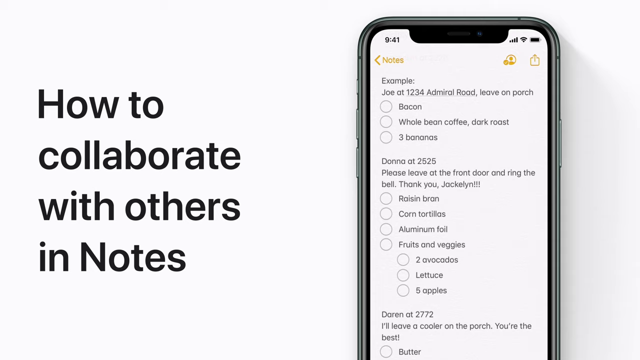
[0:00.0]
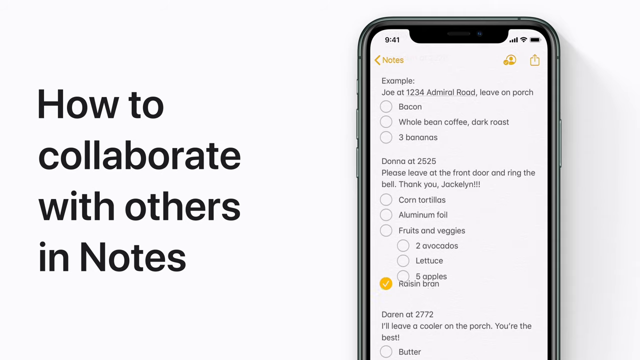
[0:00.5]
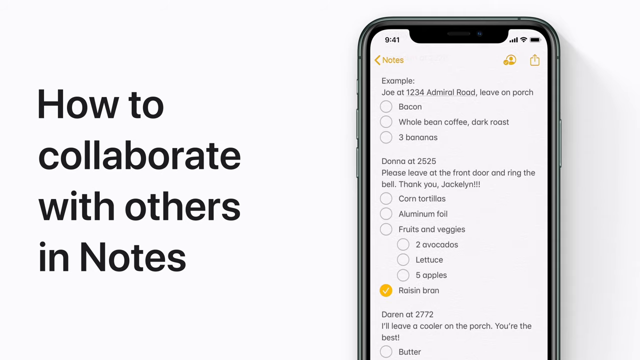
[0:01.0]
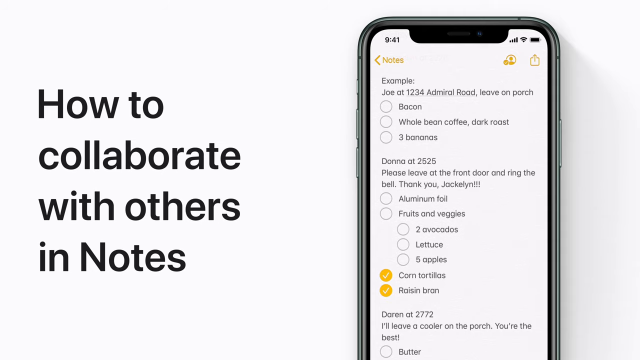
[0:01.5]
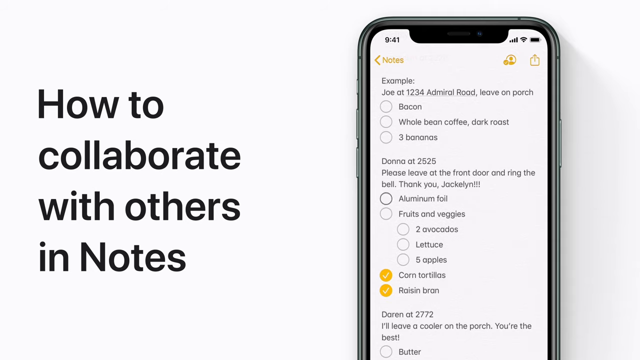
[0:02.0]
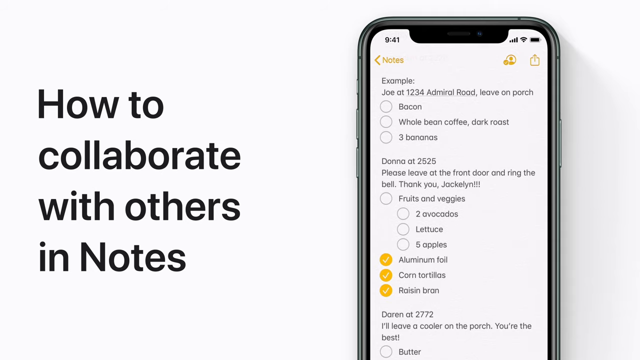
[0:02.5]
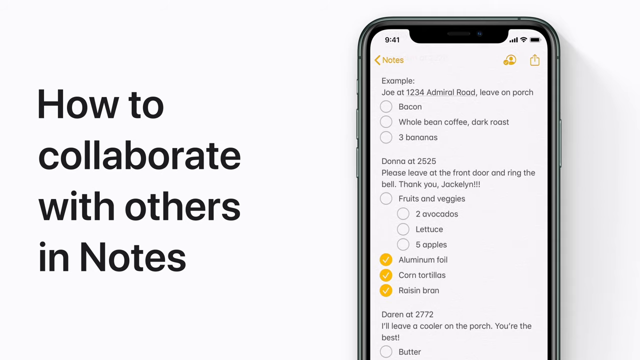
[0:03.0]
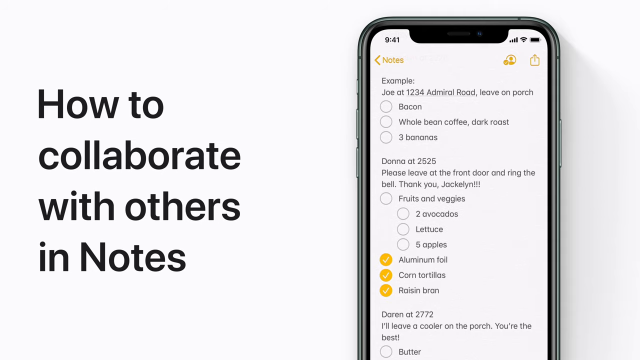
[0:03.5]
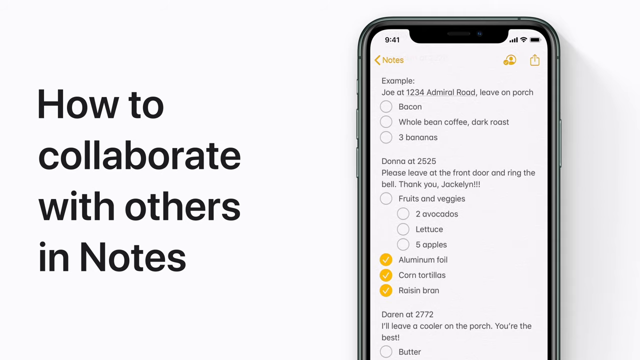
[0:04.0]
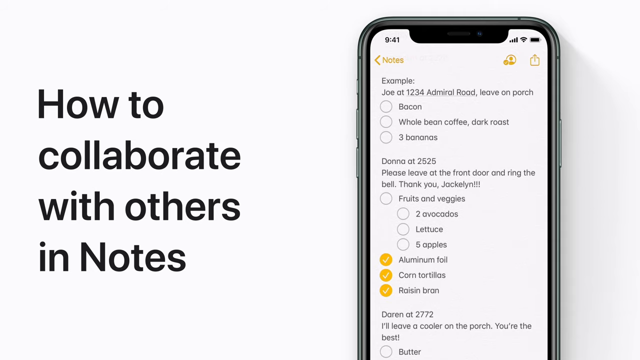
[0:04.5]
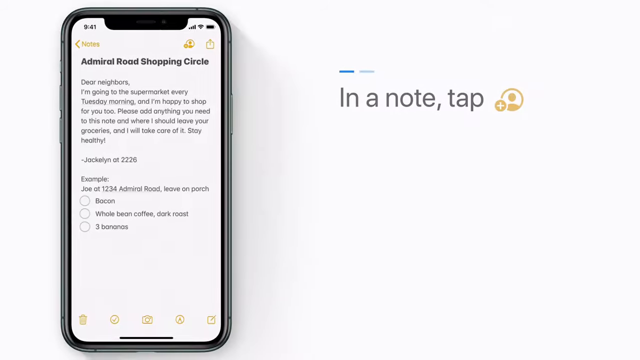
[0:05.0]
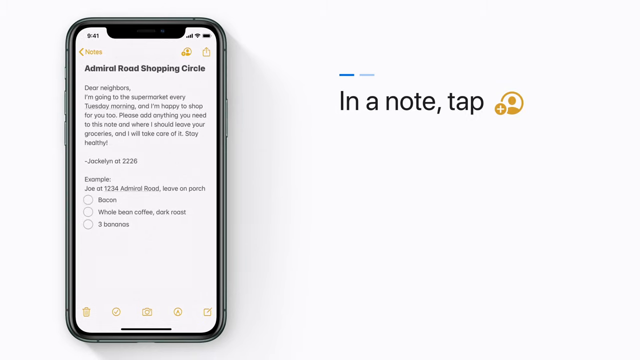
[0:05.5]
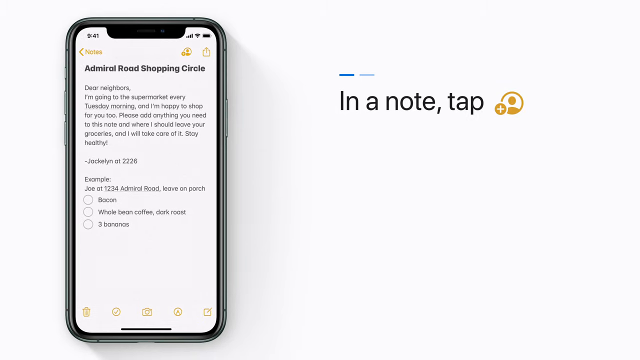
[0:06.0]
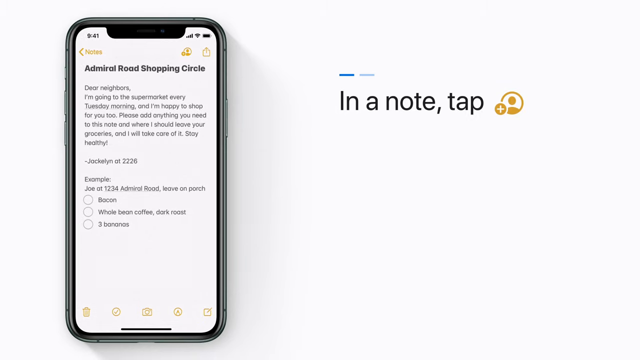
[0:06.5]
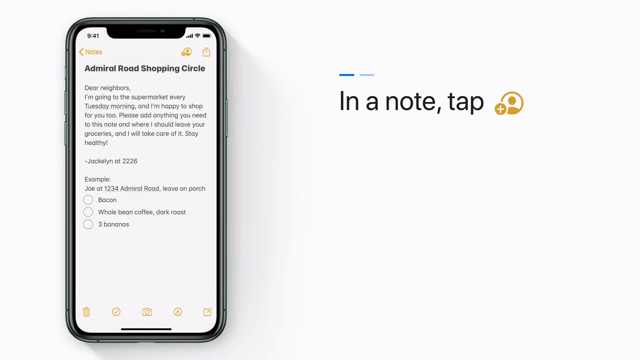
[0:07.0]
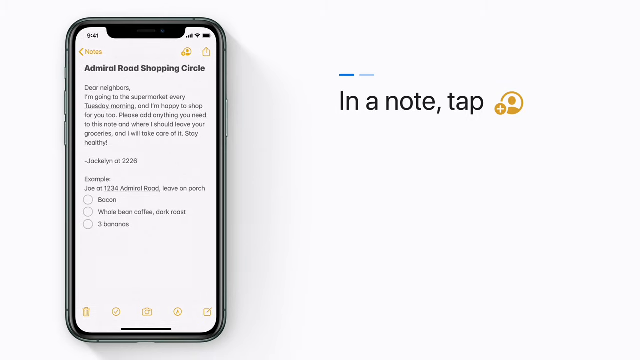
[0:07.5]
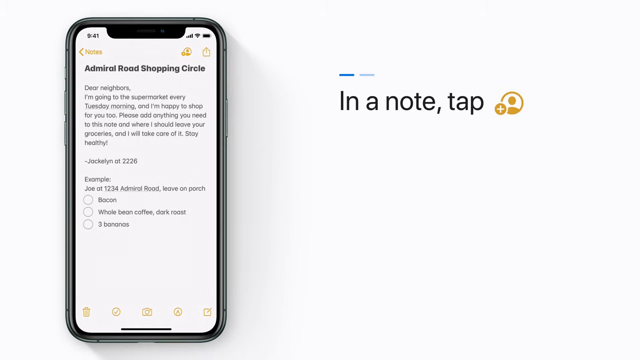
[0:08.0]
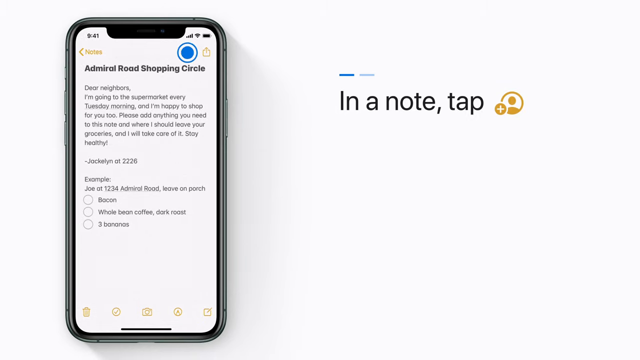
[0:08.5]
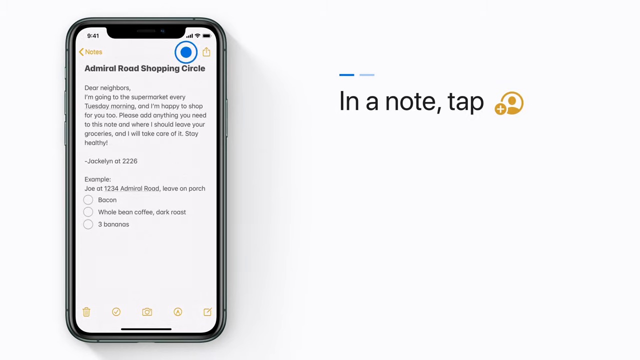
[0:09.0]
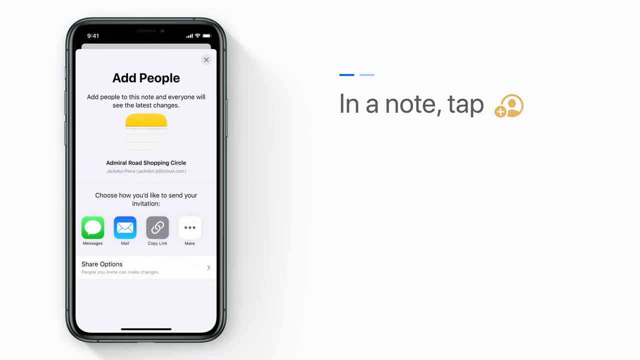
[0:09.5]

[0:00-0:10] A screen reads "how to collaborate with others in notes," and on the right side of it someone is manipulating a notes app on a smartphone screen. The instructions begin with "in a note tap the icon in the upper right." Text on the screen reads "Admiral Road Shopping Circle," and someone appears to have taken a note that starts with "dear neighbors." The explainer video is about taking a note in the notes app on a smartphone.